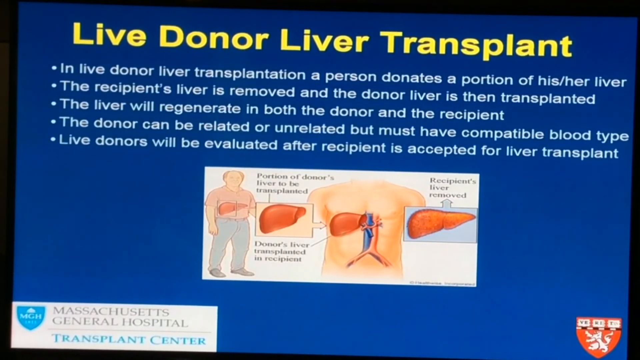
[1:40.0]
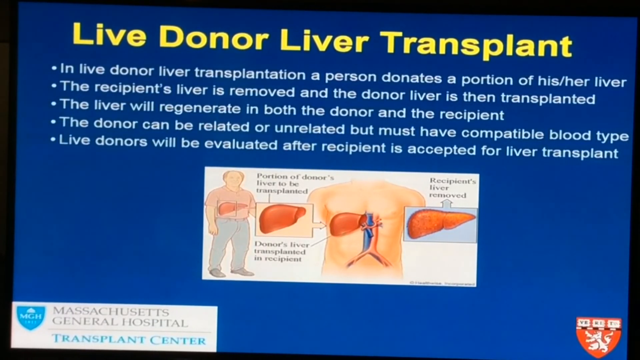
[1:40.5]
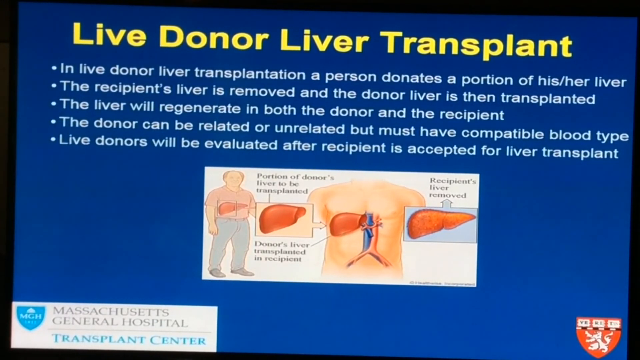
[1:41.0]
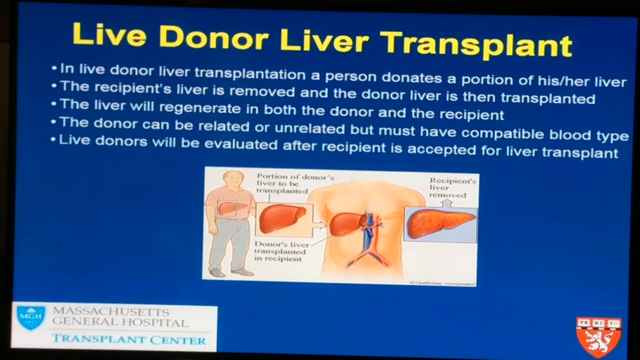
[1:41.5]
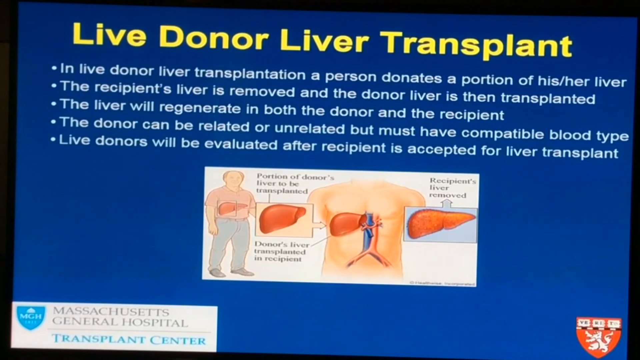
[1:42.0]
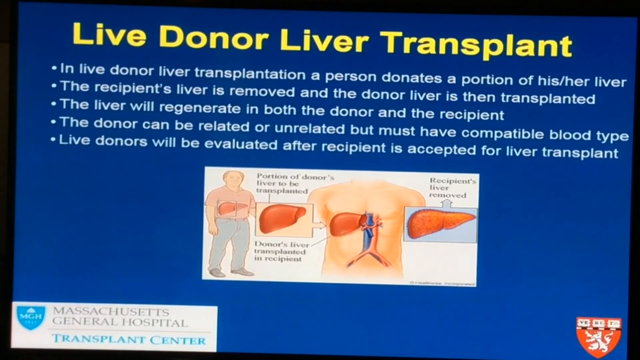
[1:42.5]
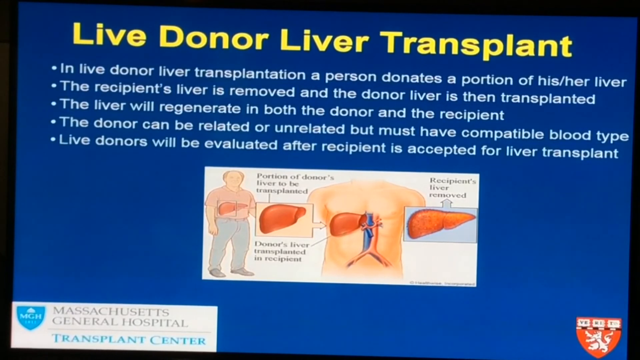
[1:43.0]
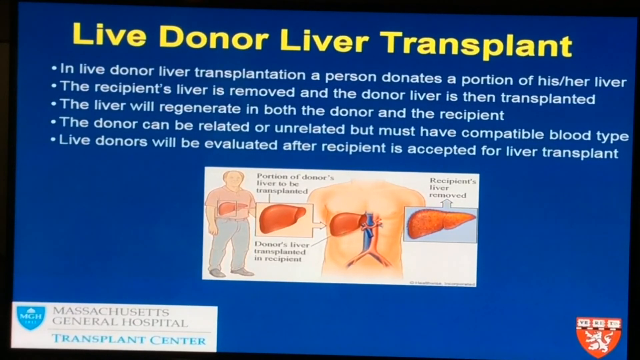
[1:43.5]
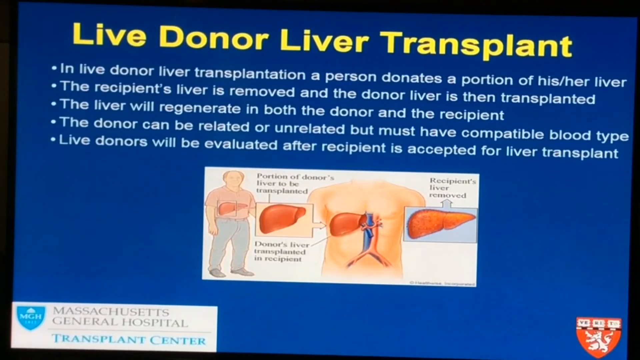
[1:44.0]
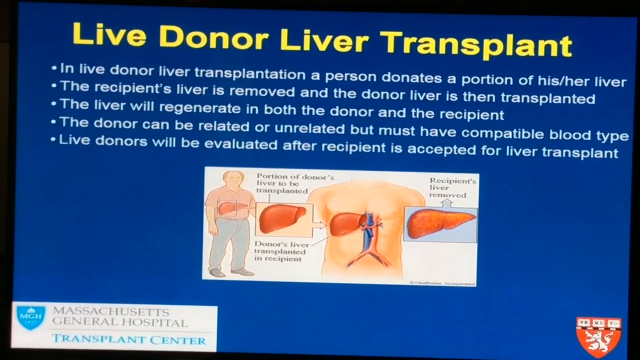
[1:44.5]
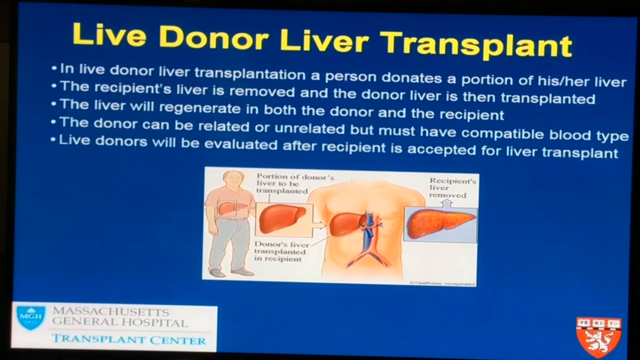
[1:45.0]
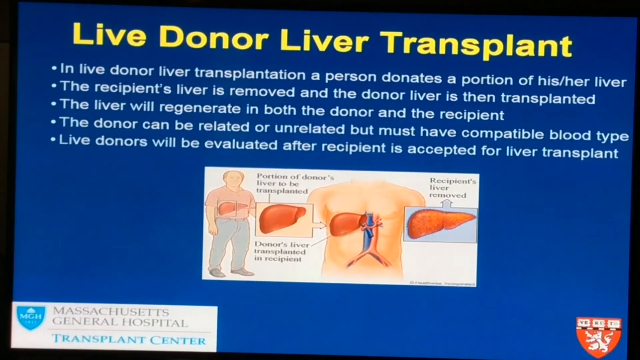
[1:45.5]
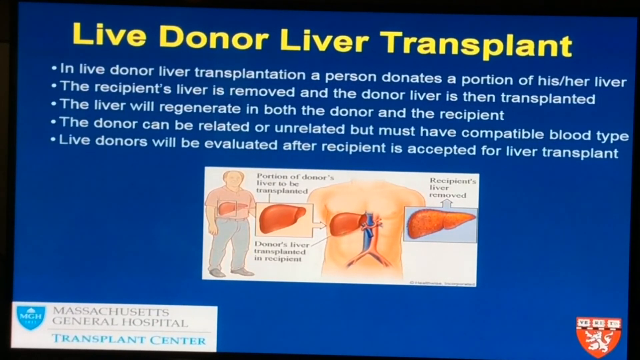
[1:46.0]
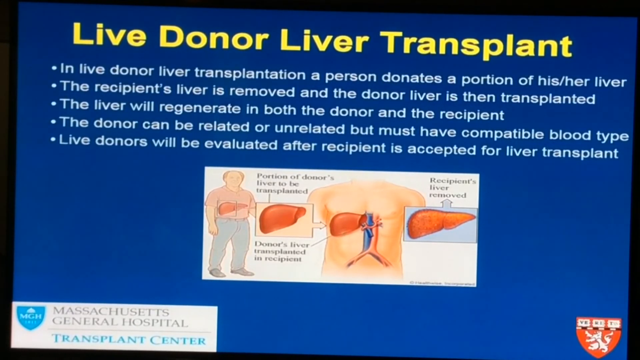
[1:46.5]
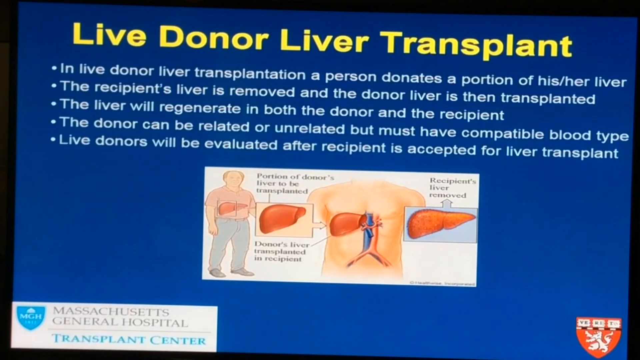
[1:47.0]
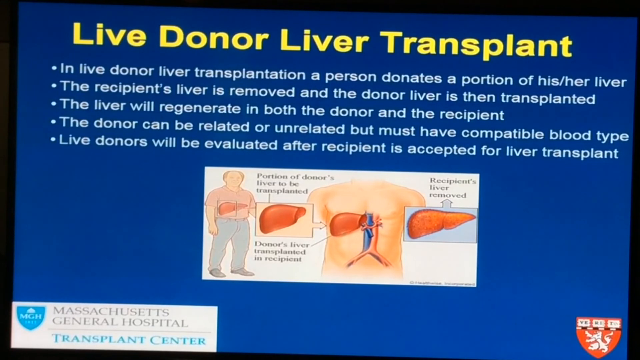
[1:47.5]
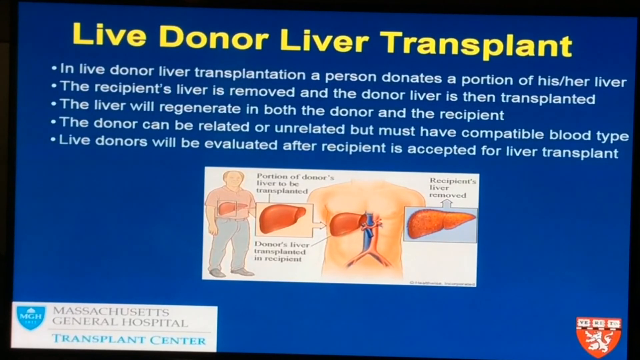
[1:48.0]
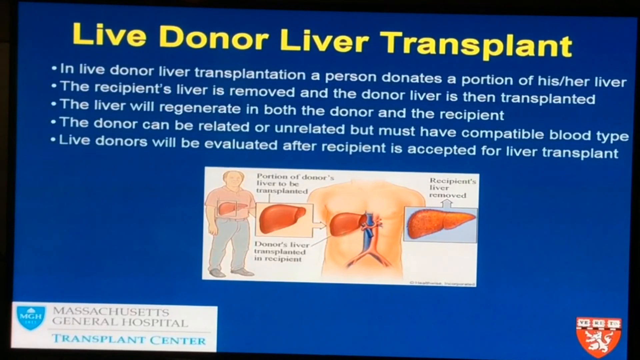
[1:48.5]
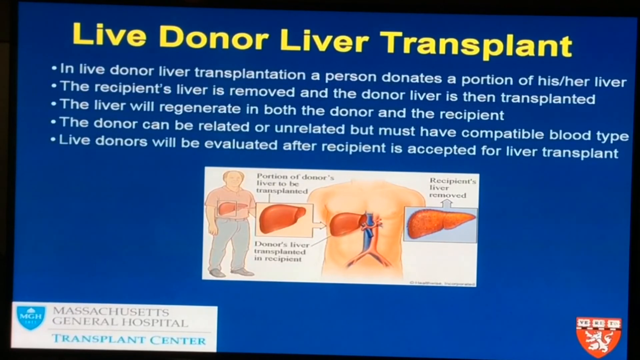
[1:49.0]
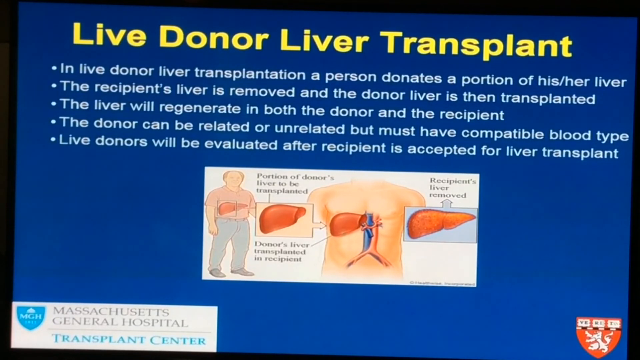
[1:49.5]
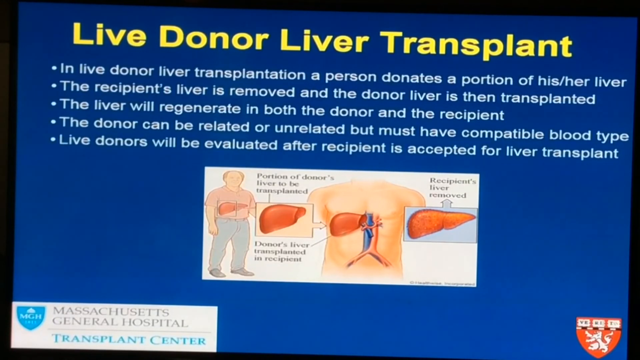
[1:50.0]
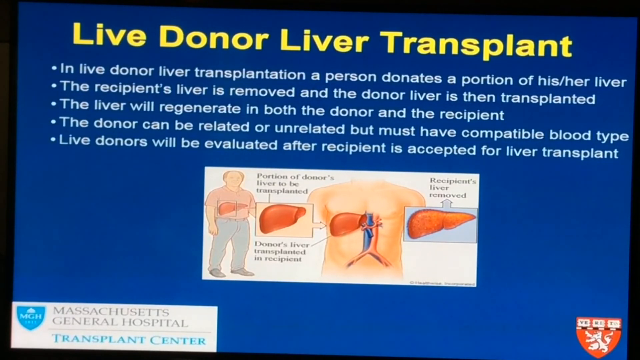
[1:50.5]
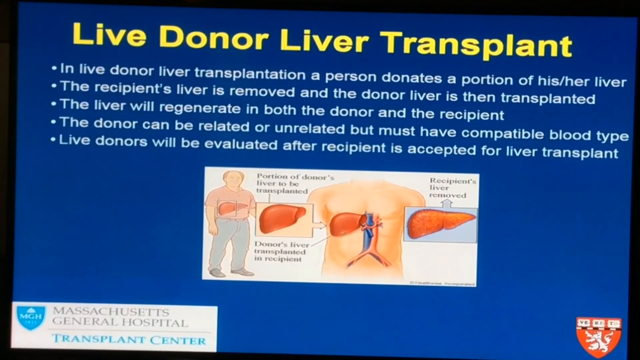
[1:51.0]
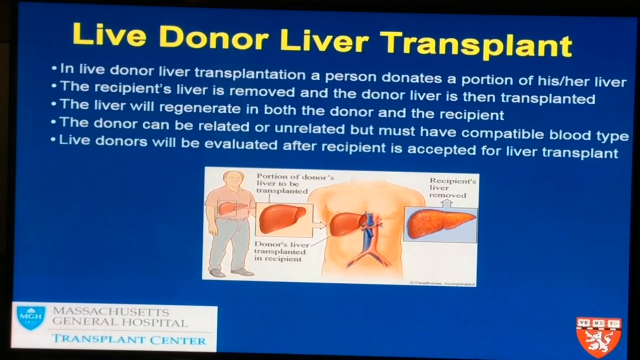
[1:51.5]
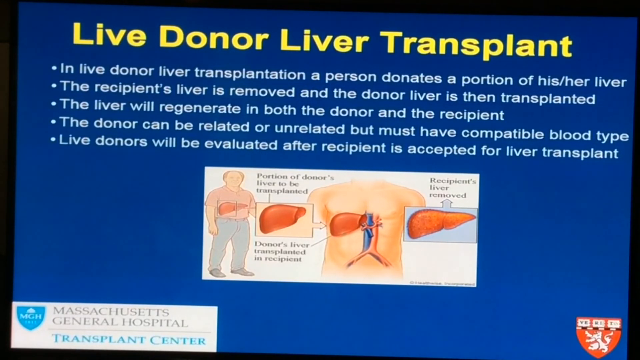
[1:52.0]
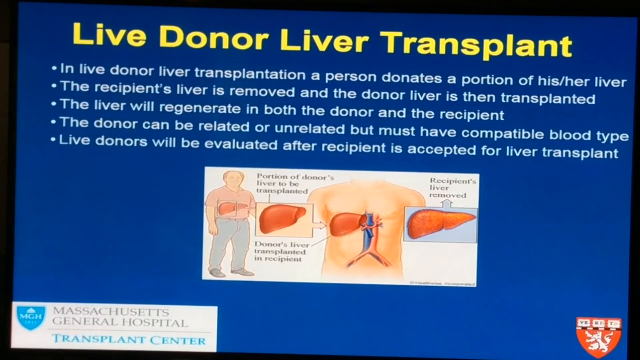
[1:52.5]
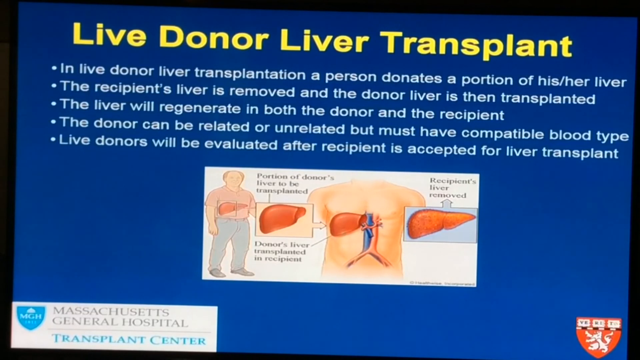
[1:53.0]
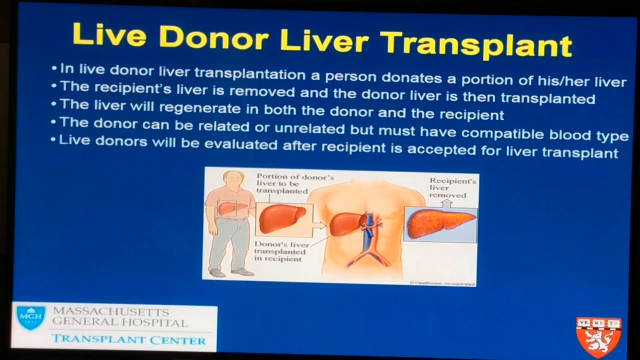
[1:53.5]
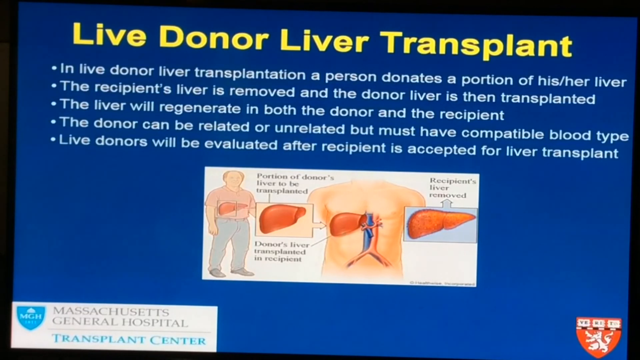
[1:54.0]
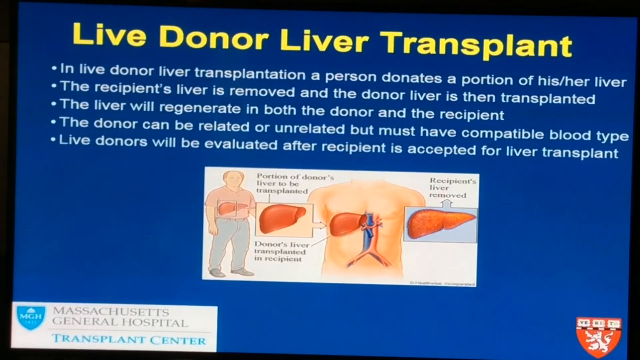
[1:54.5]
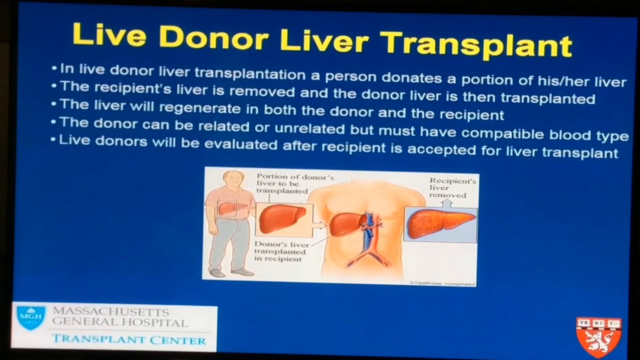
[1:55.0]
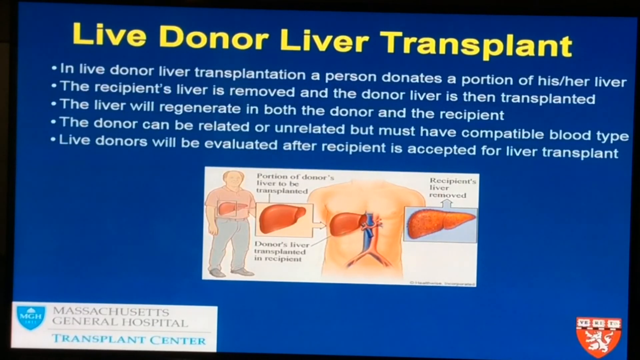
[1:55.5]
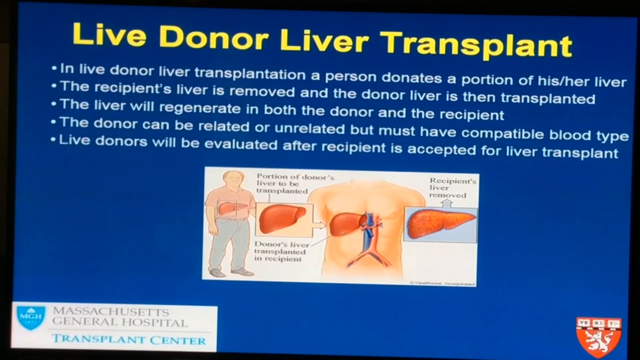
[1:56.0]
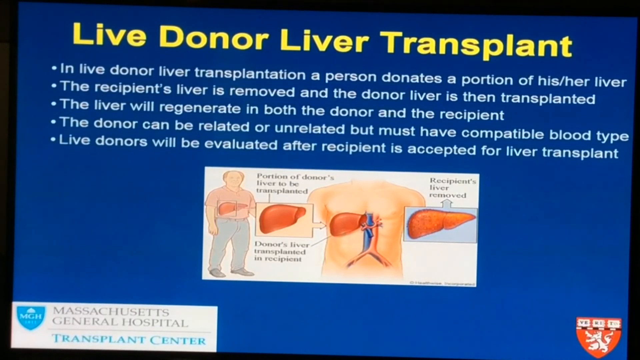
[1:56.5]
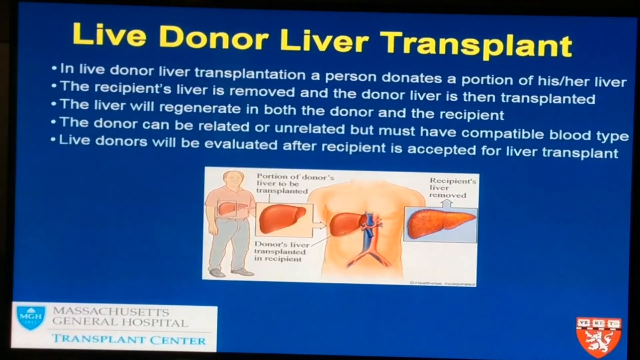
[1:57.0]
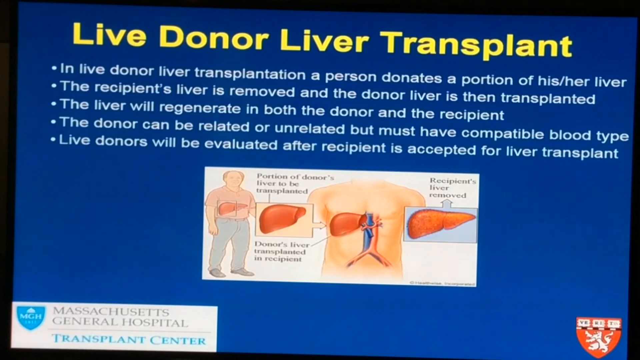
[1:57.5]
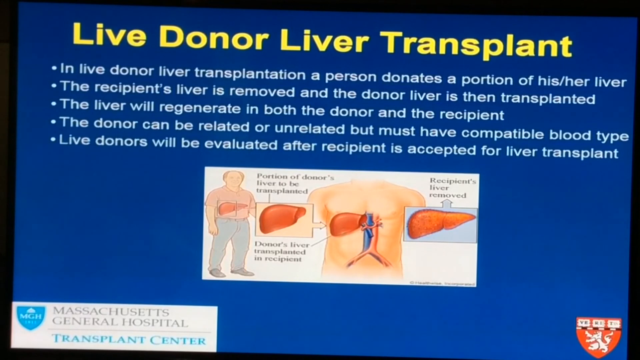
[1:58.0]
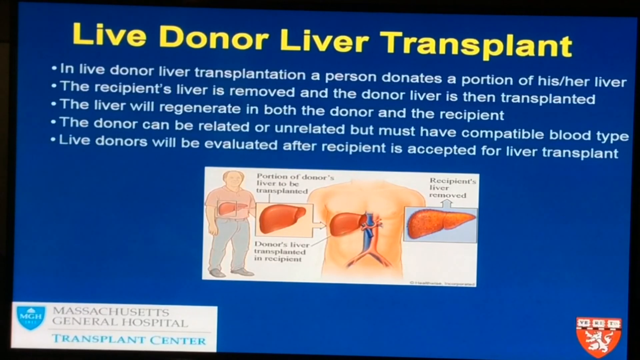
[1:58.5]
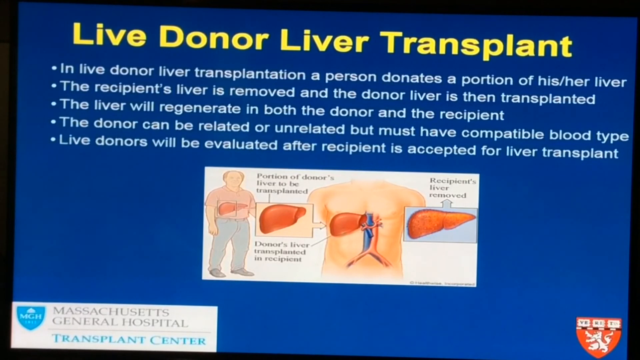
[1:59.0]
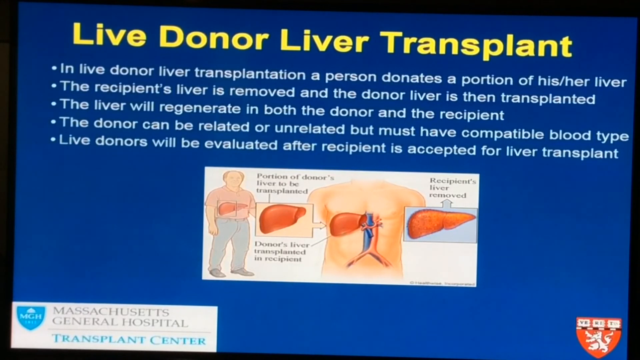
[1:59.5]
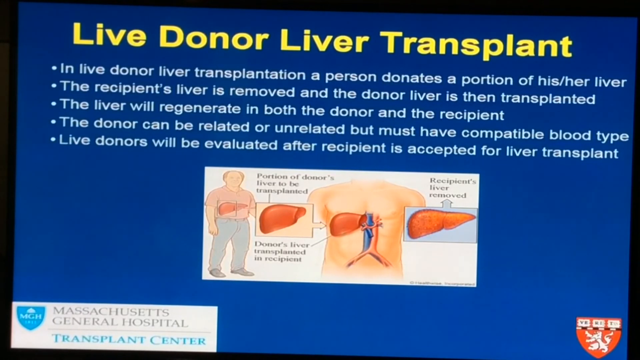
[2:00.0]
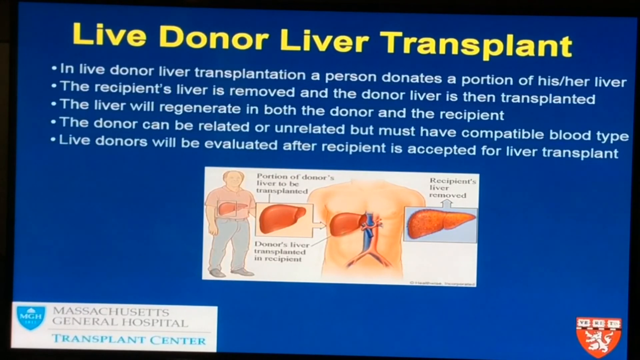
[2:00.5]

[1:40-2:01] A blue screen has yellow words at the top reading "live donor liver transplant". Below, five white dots run down, each with a sentence next to it: "in live donor liver transplantation, a person donates a portion of his or her liver"; "the recipient's liver is removed and the donor liver is then transplanted"; "the liver will regenerate in both the donor and the recipient"; "the donor can be related or unrelated, but must have compatible blood type"; and "live donors will be evaluated after a recipient is accepted for the liver transplantation". Below that is a white rectangle whose top and bottom are longer than its left and right sides. On the left side is a man in a pink shirt and blue jeans, his liver visible through his shirt. To his right is a large picture of a liver with words written at the top and bottom. To the right of that is a depiction of a man's chest and stomach, with a liver on the left side of the image, below his right pectoral. To the right of that is another image of a liver.